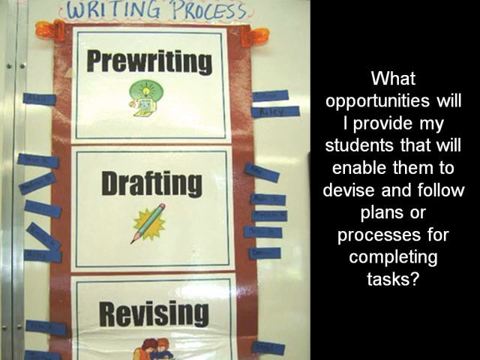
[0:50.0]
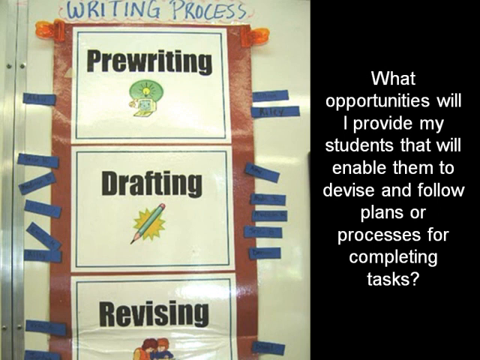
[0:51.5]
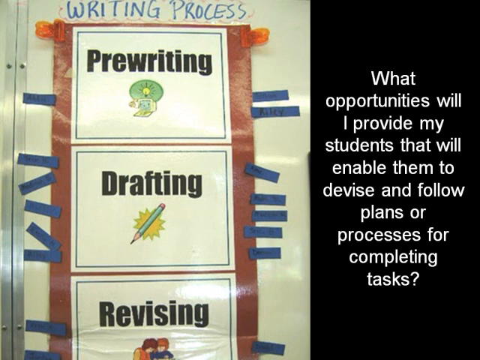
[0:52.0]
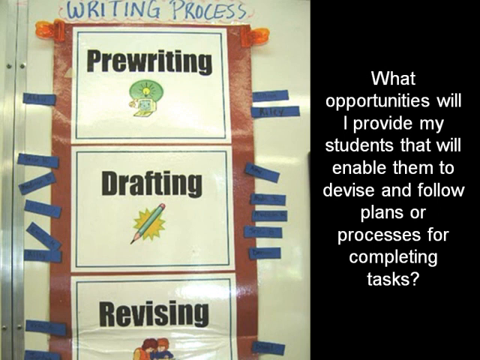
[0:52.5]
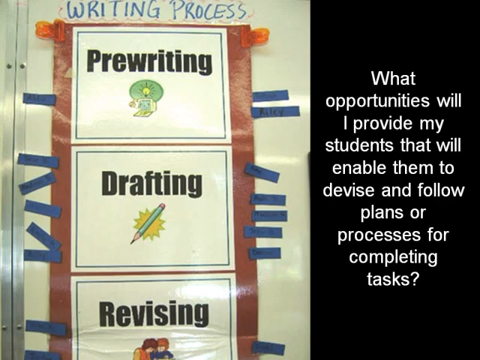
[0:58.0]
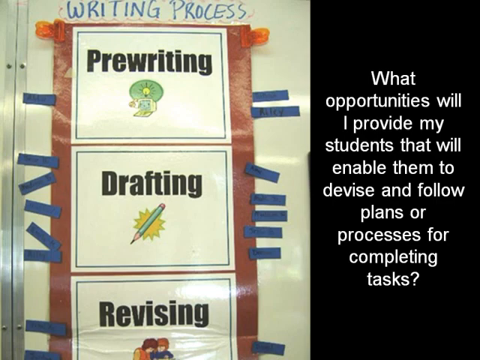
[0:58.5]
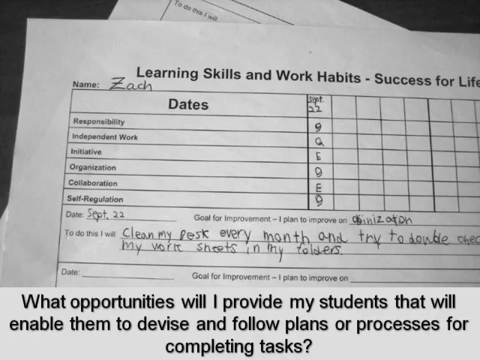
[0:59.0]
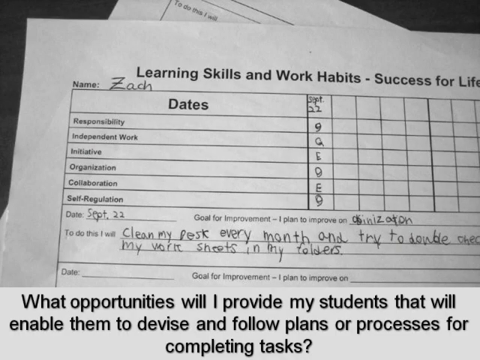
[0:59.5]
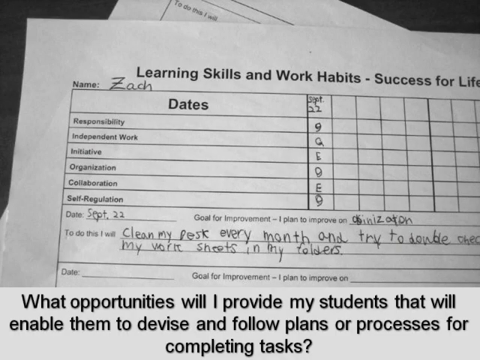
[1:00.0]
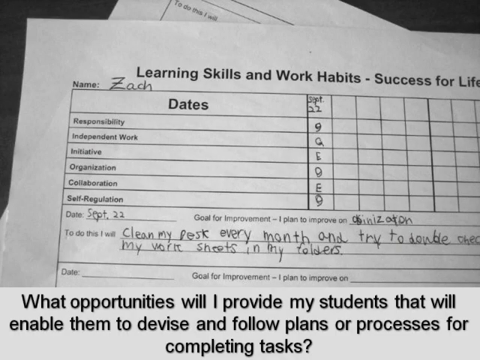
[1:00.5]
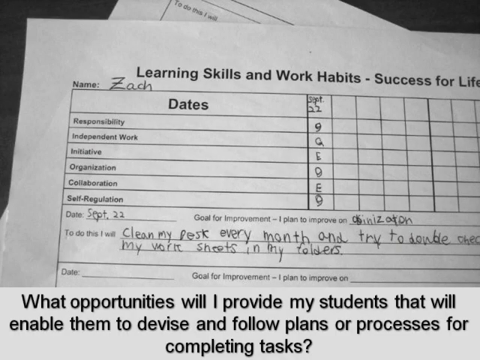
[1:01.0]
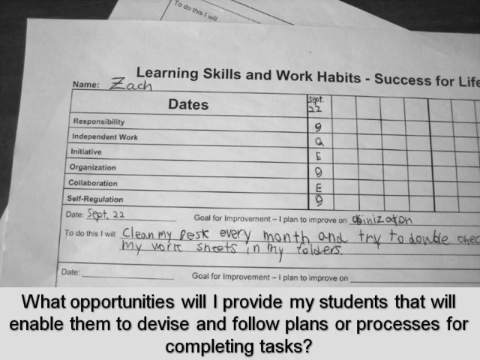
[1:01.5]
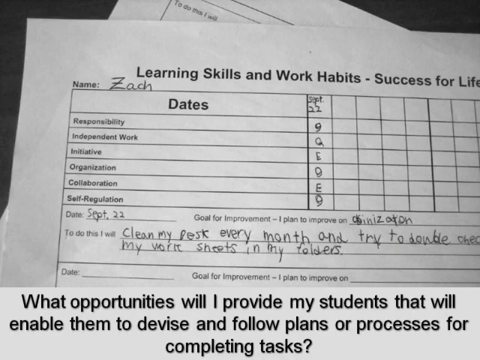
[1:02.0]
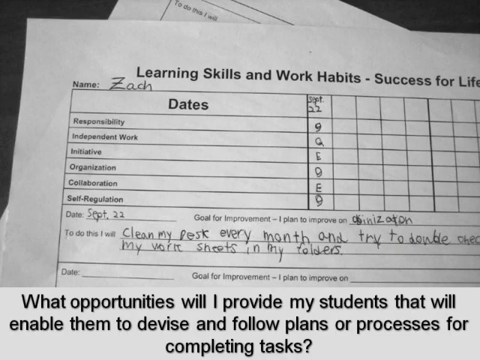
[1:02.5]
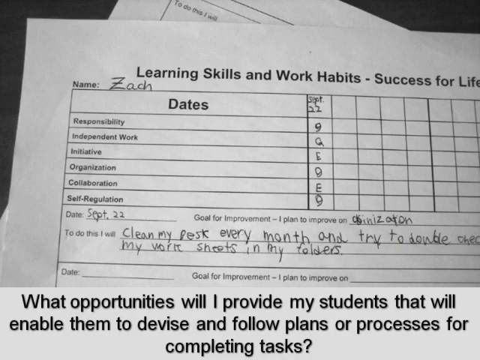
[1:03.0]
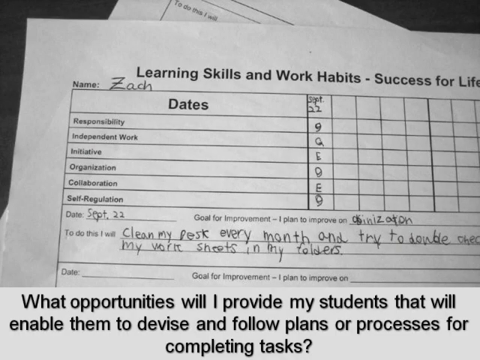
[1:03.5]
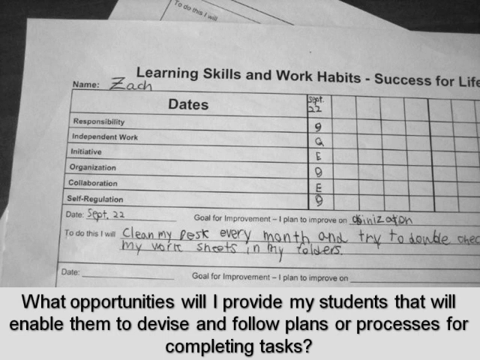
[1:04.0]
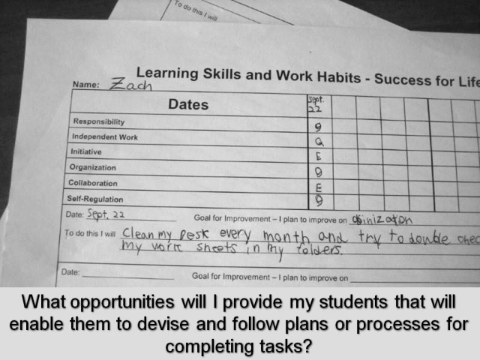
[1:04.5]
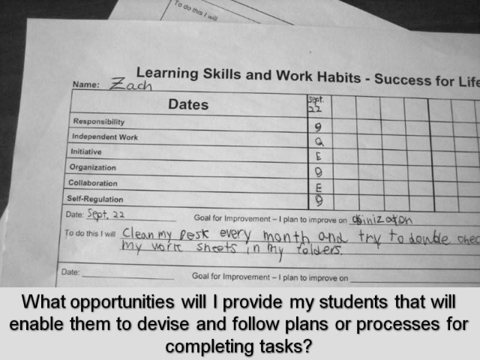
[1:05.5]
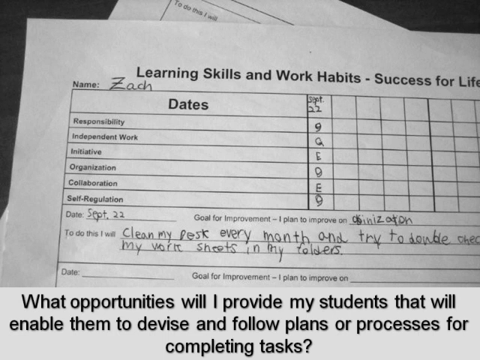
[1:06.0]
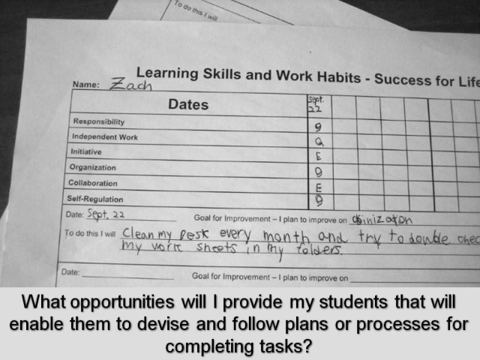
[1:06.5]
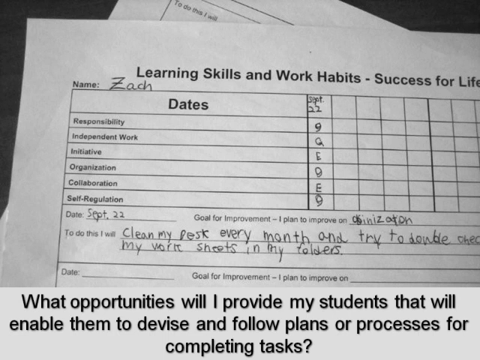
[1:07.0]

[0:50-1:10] On the left, cards with writing on them are on a light-colored background like a page from a binder; on the right, white lettering on a black background says "what opportunities will I provide my students that will enable them to devise and follow plans or processes for completing tasks". On the binder page, the top card says "pre-writing" with a light bulb on a green background, the center card says "drafting" with a pencil and a yellow background, and the bottom card says "revising". There are blue tabs on each side of the binder paper. The view changes to a piece of paper, a form for students headed "learning skills and work habits, success for life", listing responsibility, independent work, initiative, organization, collaboration and self-regulation, with numbers and letters beside the lines. A comment at the bottom says "clean my desk every month and try to double check my worksheets in my folders". At the bottom the text says "what opportunities will I provide my students that will enable them to devise and follow plans or processes?"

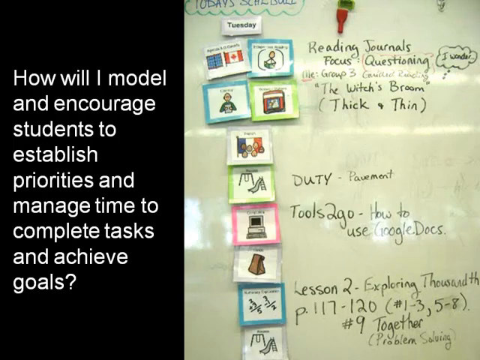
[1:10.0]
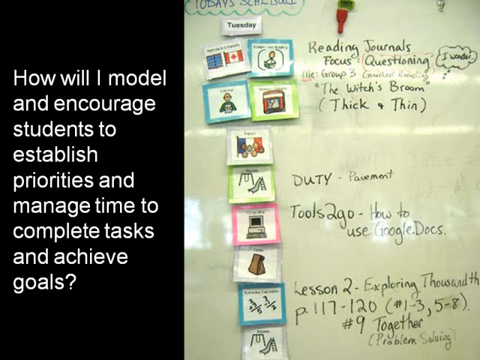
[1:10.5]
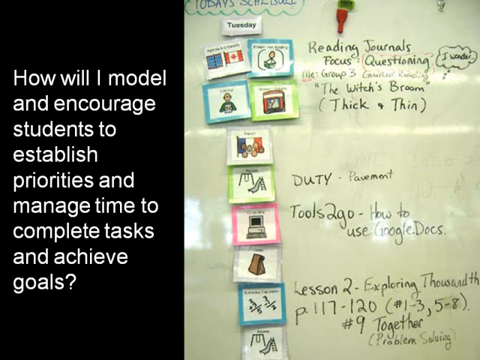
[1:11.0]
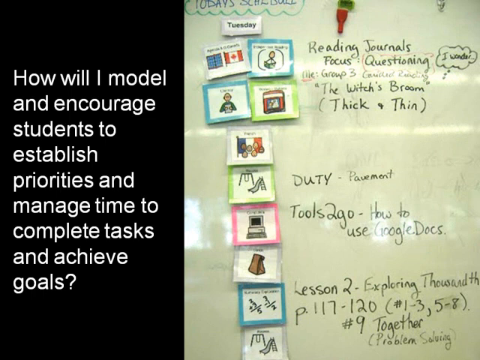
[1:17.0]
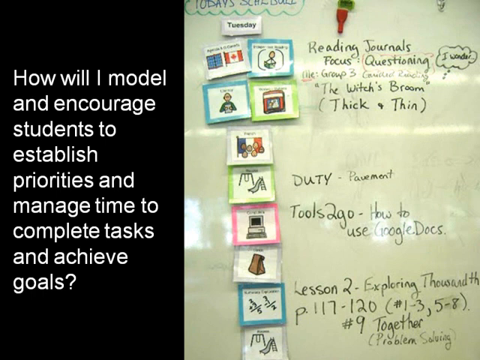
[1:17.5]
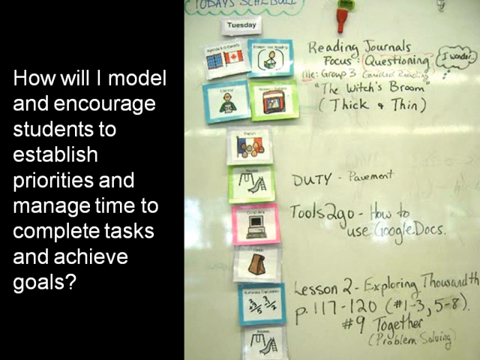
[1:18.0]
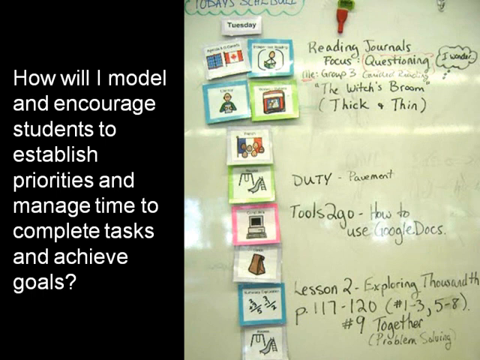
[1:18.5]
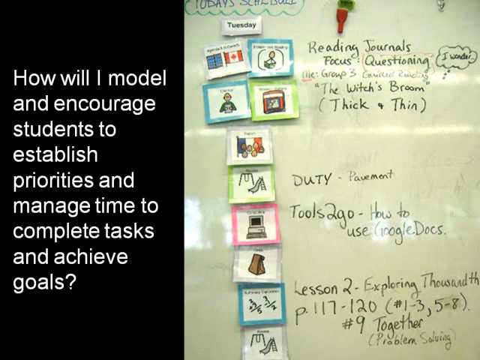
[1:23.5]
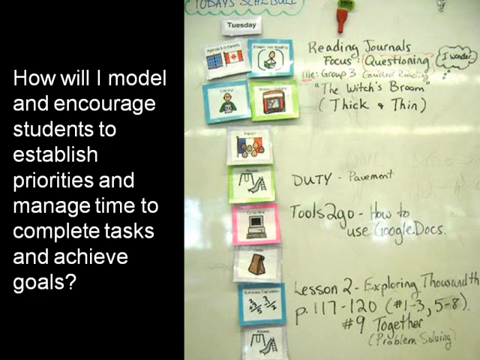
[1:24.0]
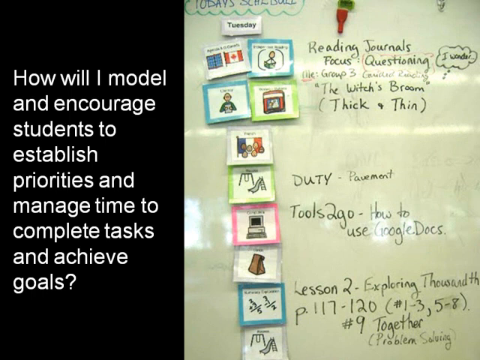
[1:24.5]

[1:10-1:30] A black rectangle on the left has large white letters that say "How will I model and encourage students to establish priorities, manage time to complete tasks, and achieve goals?" On the right is a darker-colored binder page with the handwritten heading "today's schedule" and pictures underneath: a slide like on a playground, a sack lunch in a brown paper bag, a sticky-note picture of a male student holding a book, a math problem showing a division that needs to be done, and various other sticky-note-type pictures. The text reads "reading journals, focus, questioning, group three, the witch's broom, thick and thin, I wonder". In the middle it says "duty, payment, tools to go, how to use Google Docs". At the bottom it says "lesson two, exploring thousands, page 117 through 120, number nine, together".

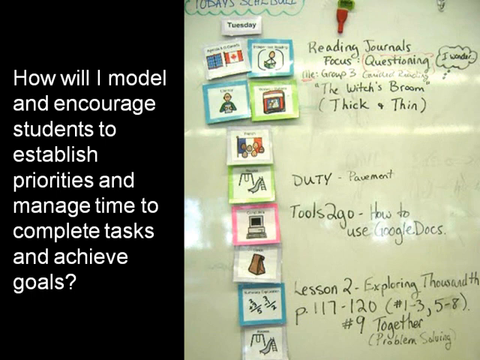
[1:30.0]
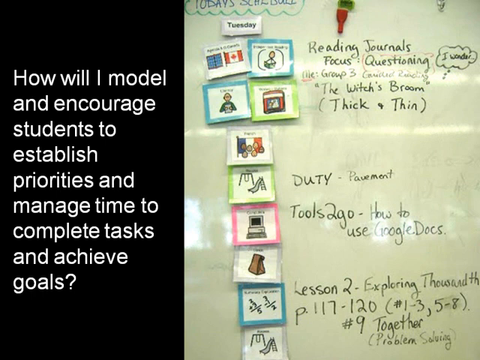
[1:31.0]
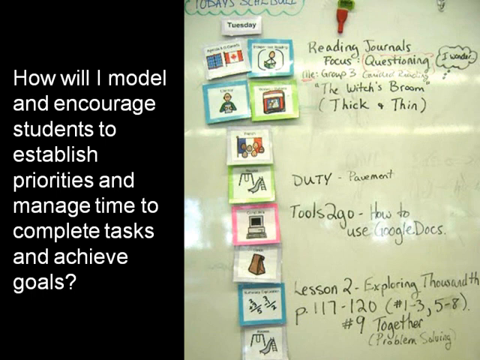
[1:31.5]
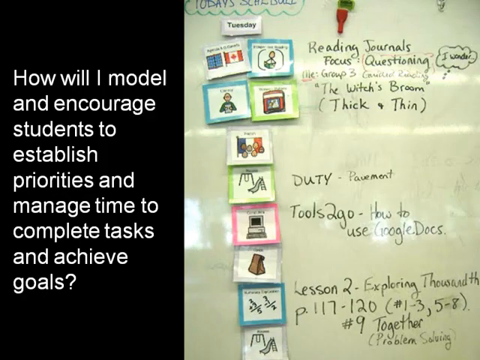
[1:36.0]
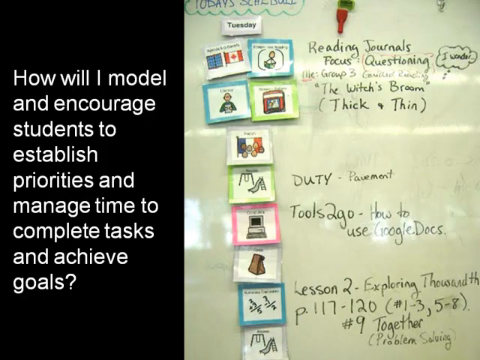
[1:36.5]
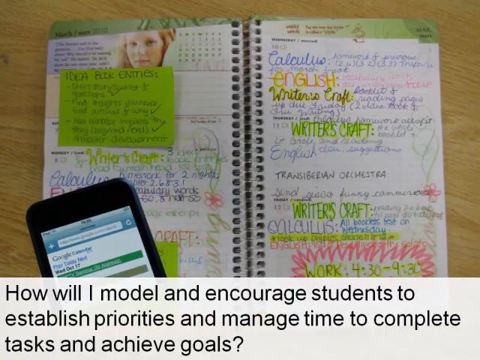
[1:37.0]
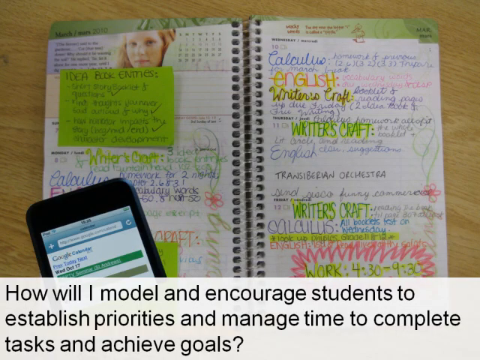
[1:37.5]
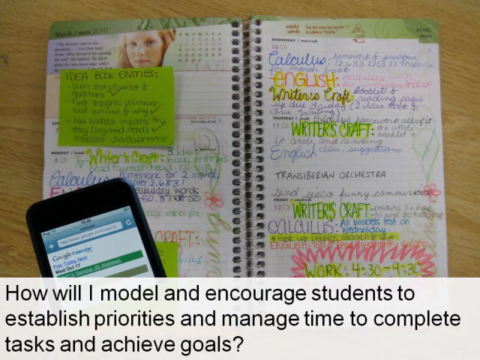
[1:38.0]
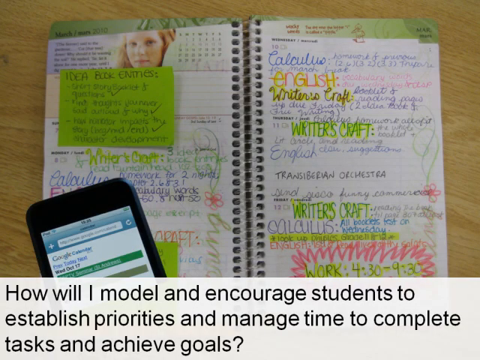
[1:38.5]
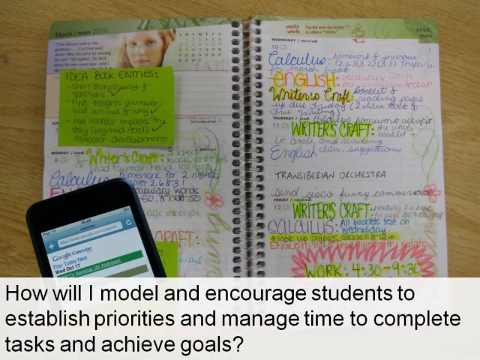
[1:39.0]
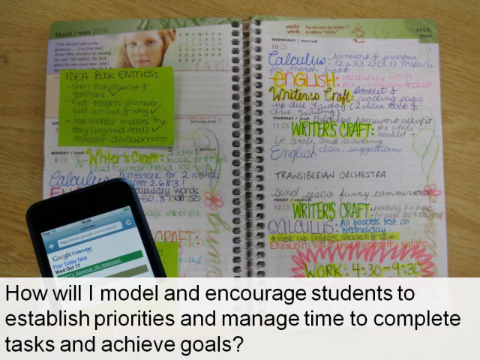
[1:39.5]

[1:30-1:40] A large black rectangle on the left has large white lettering that says "how will I model and encourage students to establish priorities and manage time to complete tasks and achieve goals?" On the right is a light-colored page from a binder that says "today's schedule" at the top and "Tuesday" below, with sticky-note-type pictures: a Canadian flag, a female student opening a book, a male student holding a book, a flag from some country, a slide like that in a playground, a computer, a sack lunch in a brown paper sack, and a division problem. The view then changes to an open spiral notebook with the student's handwriting inside in big print letters. A green sticky note on the left page says "idea, fast, enemies", a cell phone with Google open on it is on top of the left side of the notebook, and there is much writing on the right-hand page.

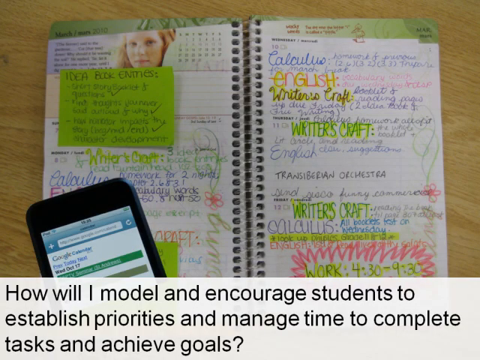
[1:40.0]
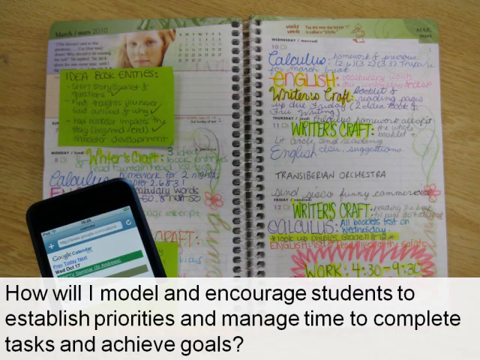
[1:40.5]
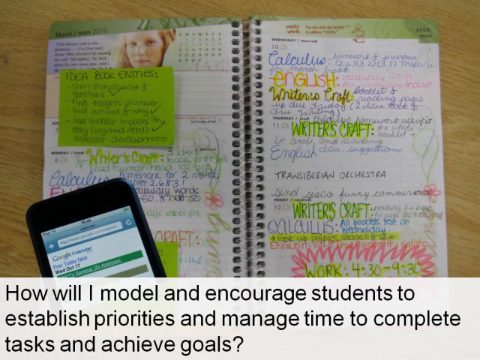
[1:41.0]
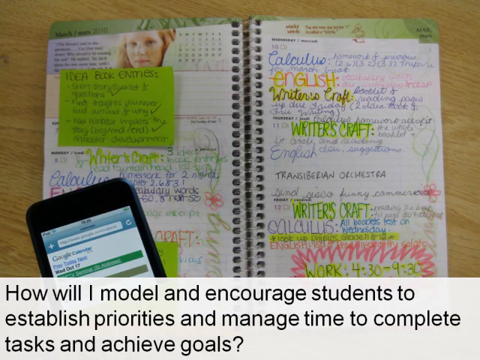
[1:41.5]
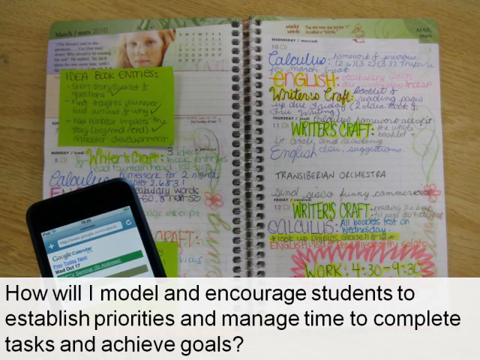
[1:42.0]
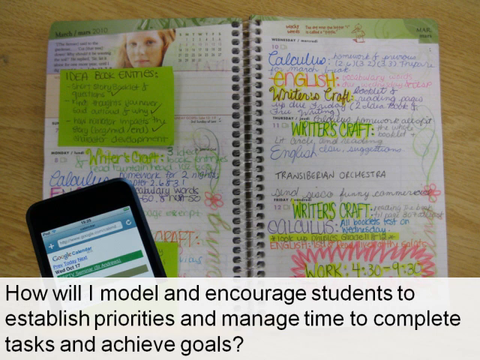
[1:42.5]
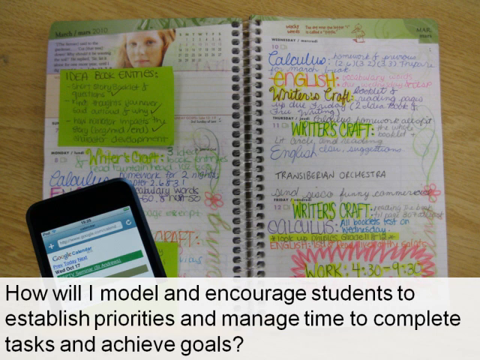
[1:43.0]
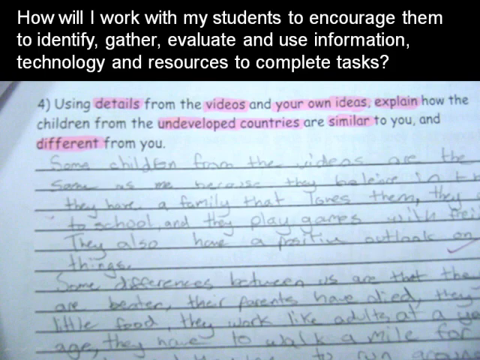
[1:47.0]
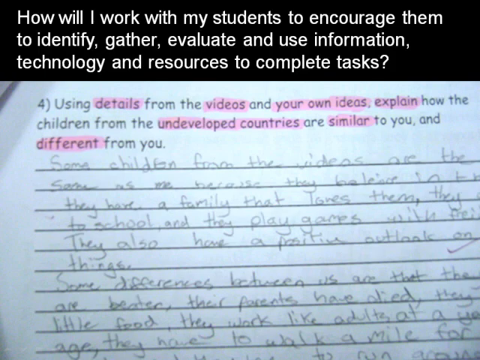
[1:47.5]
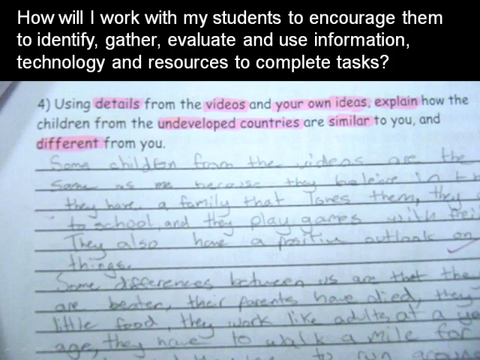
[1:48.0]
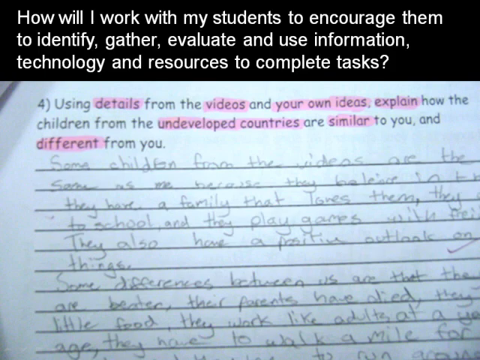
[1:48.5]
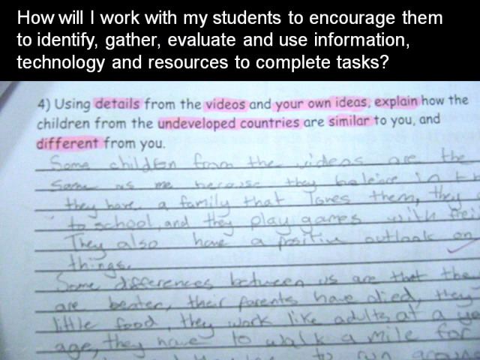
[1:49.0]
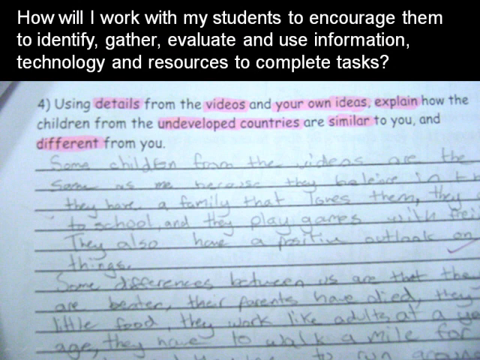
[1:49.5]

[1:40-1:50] An open spiral notebook is on a light-colored wooden table. On the left page there is a cell phone with Google open on it and a sticky note that says "idea, back, enemies", with check marks on the listing. The right-hand page has large handwritten letters: "Calculus", then "English", then "Writer's Craft", with "Writer's Craft" highlighted in yellow below it, then "English", "Trans-Siberian Orchestra", "Writer's Craft" again highlighted in yellow, and "Calculus". At the bottom it says "work for 430 to 930", with pink triangles circling all around it.